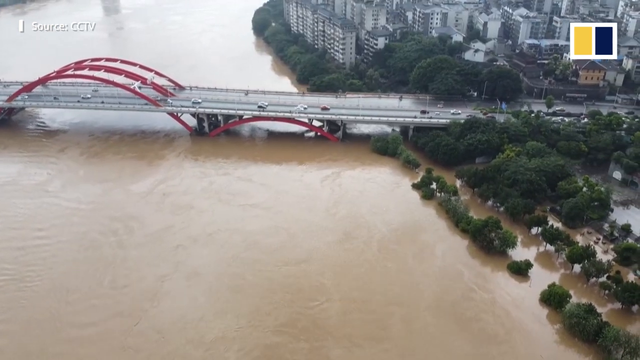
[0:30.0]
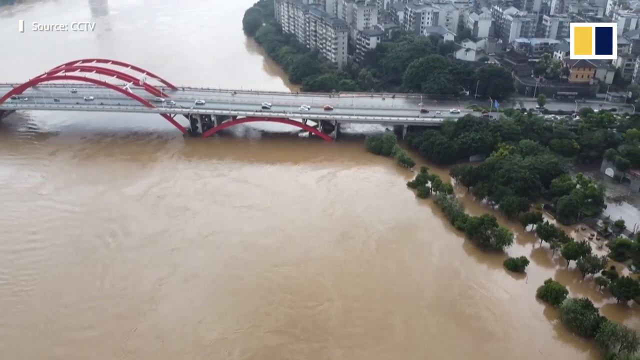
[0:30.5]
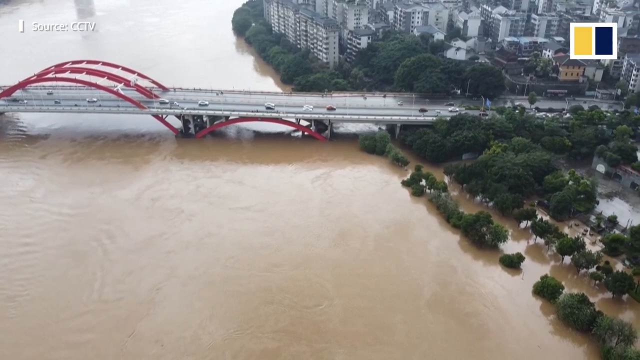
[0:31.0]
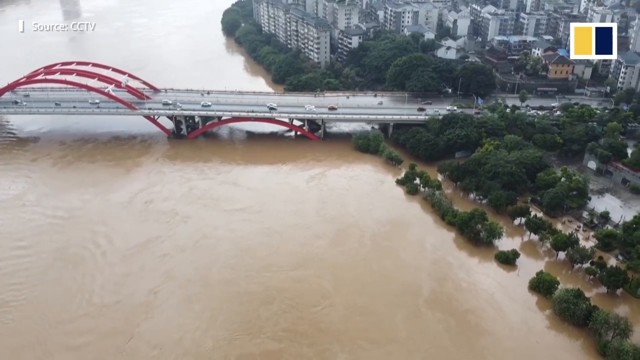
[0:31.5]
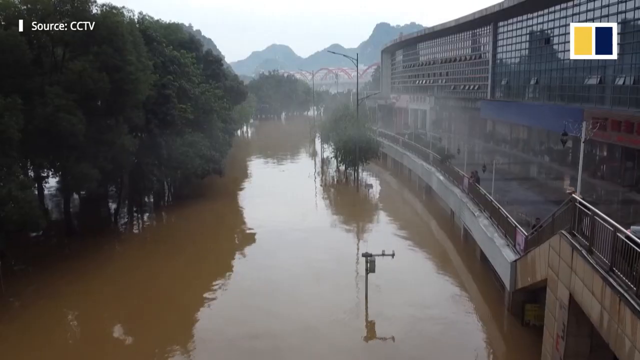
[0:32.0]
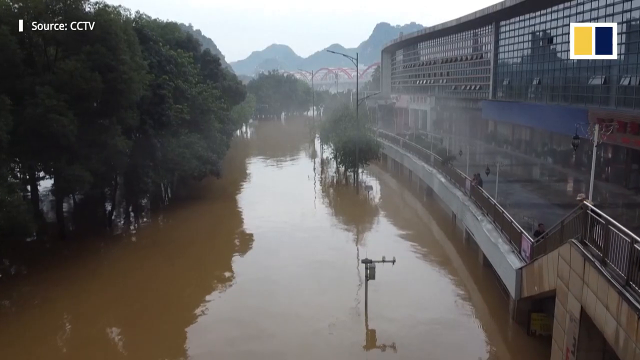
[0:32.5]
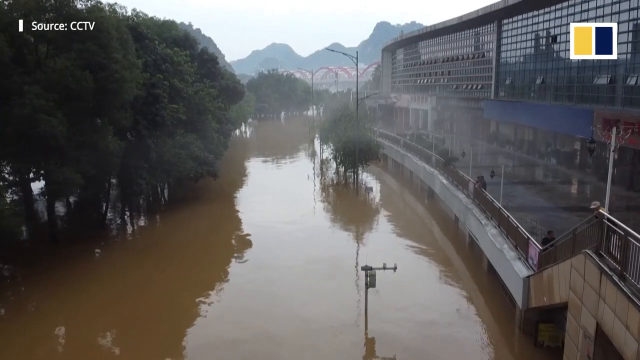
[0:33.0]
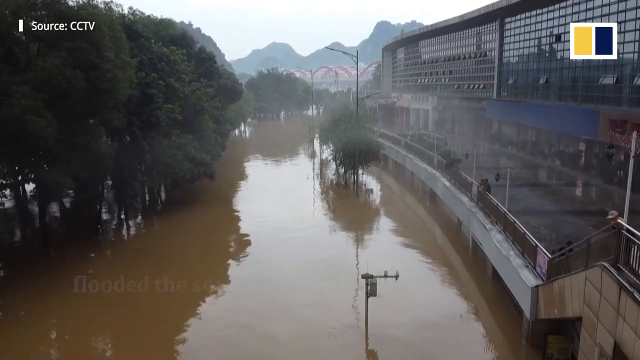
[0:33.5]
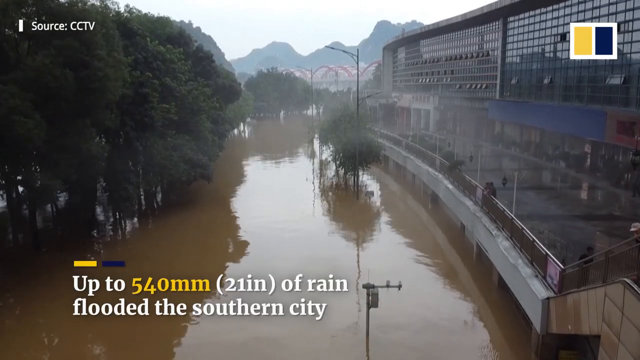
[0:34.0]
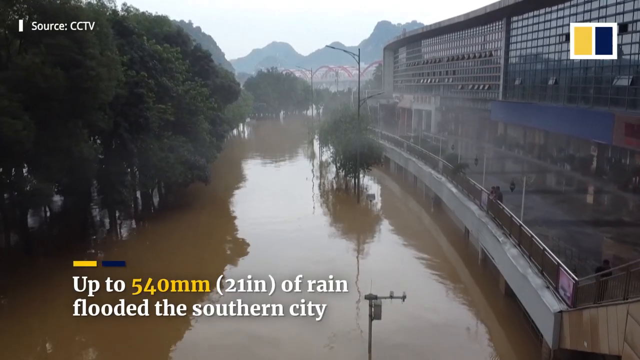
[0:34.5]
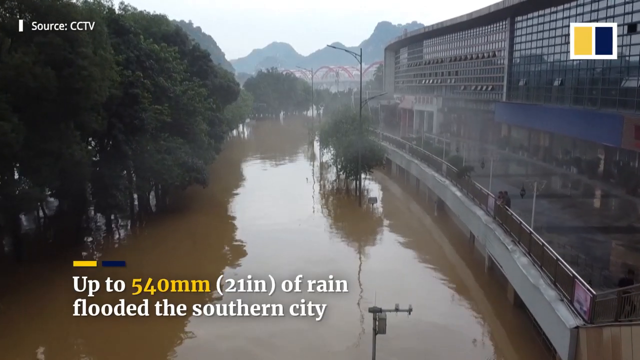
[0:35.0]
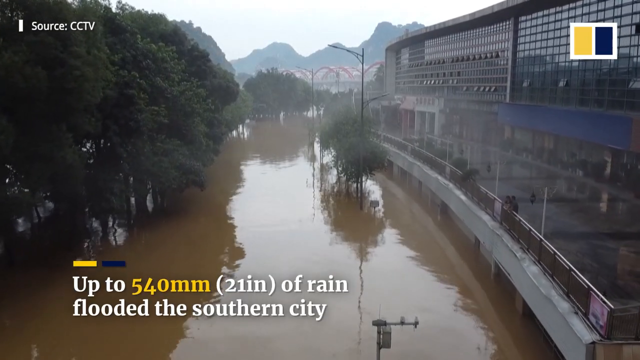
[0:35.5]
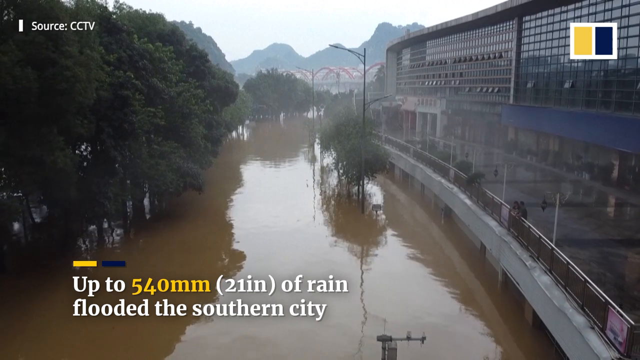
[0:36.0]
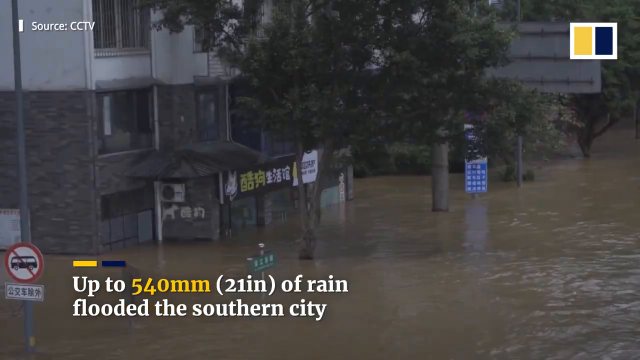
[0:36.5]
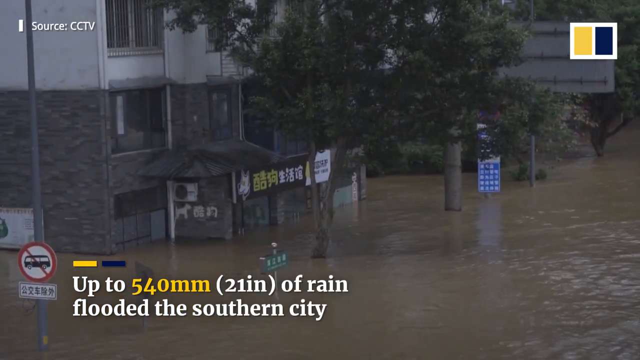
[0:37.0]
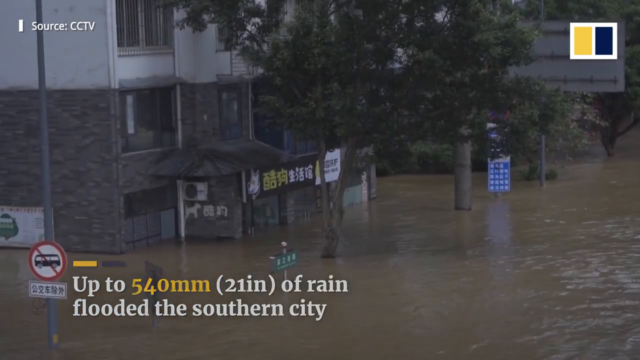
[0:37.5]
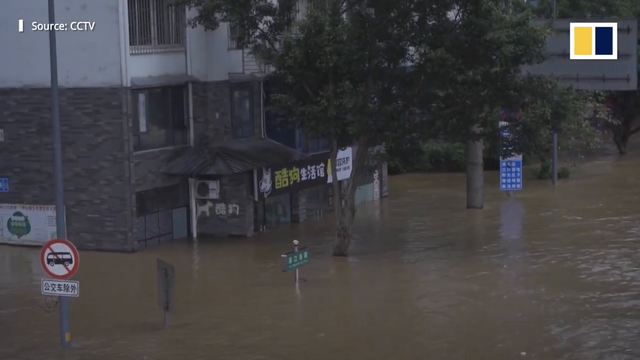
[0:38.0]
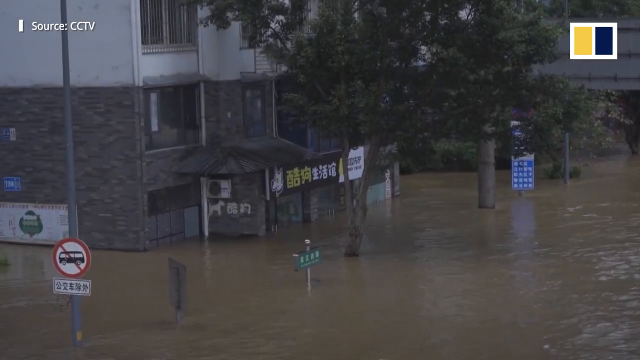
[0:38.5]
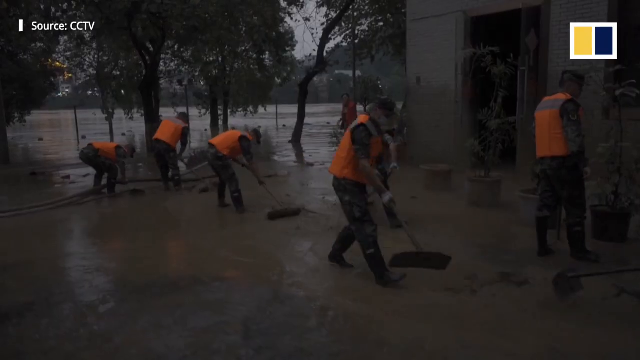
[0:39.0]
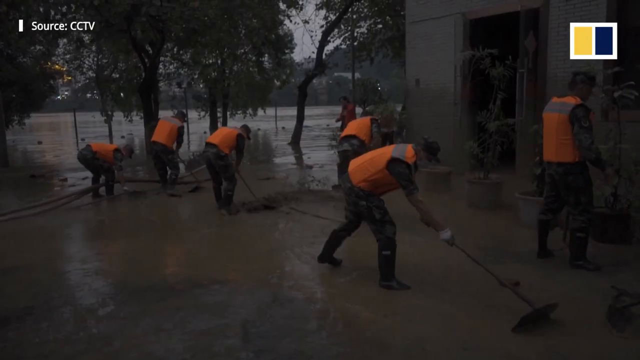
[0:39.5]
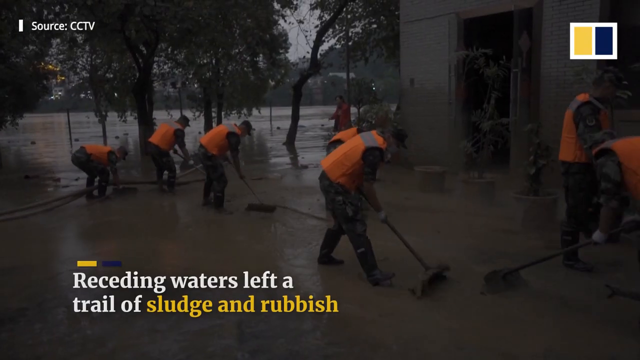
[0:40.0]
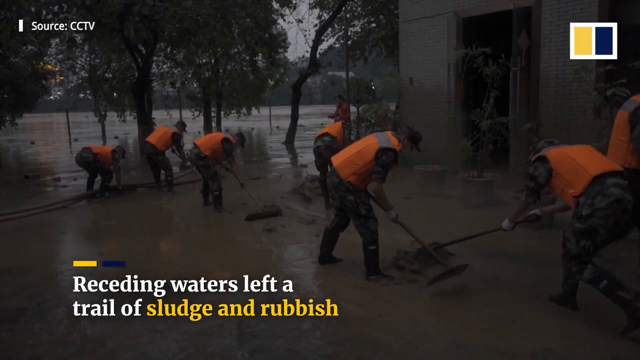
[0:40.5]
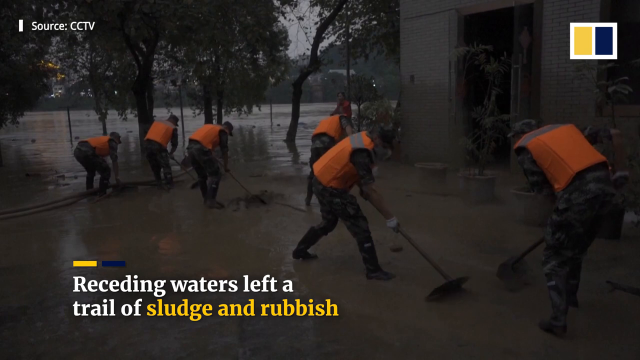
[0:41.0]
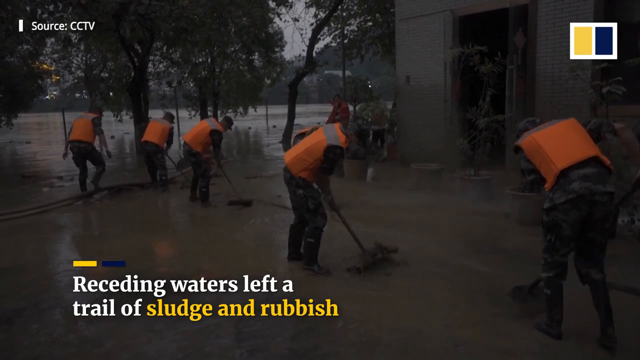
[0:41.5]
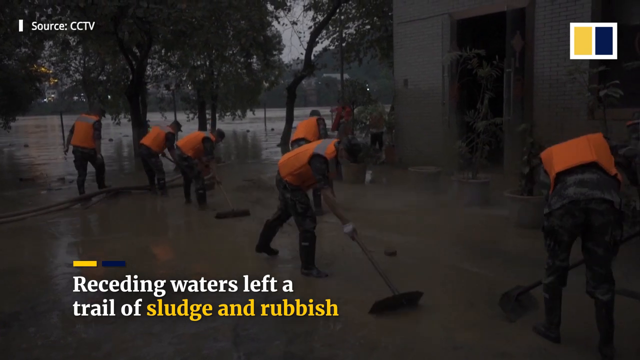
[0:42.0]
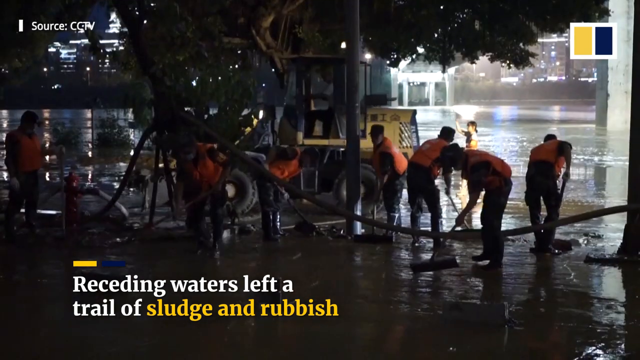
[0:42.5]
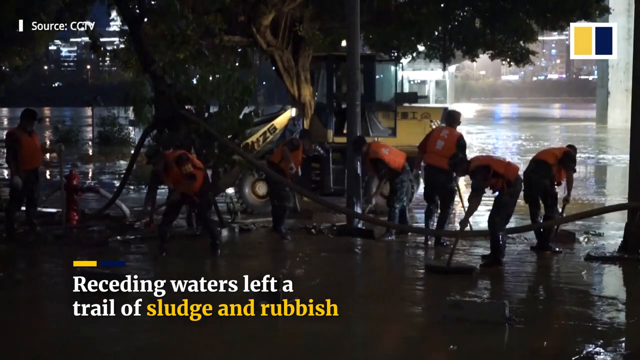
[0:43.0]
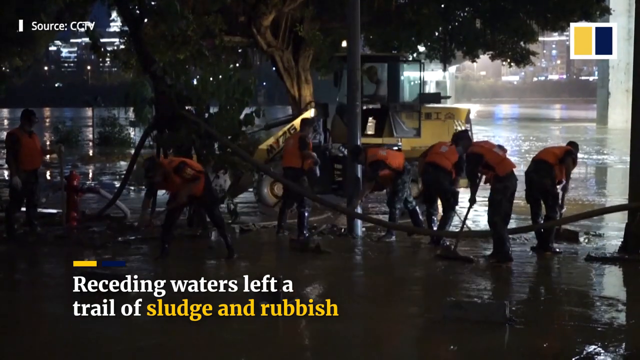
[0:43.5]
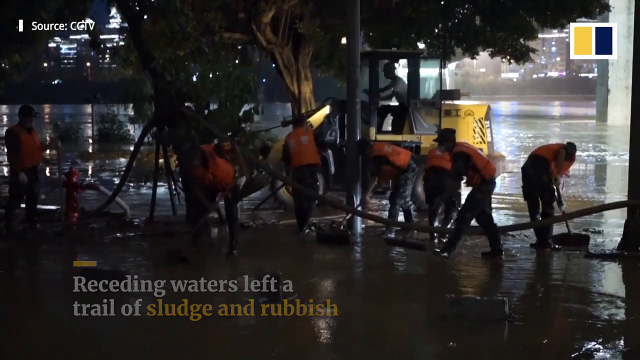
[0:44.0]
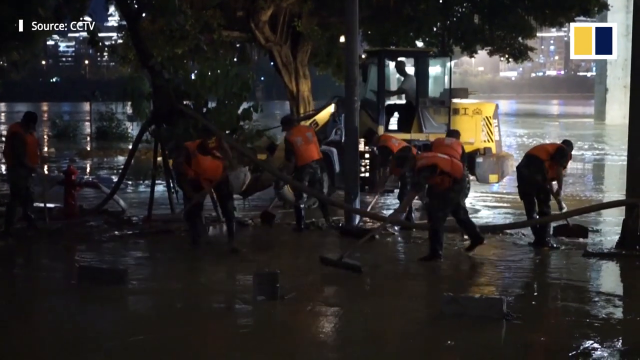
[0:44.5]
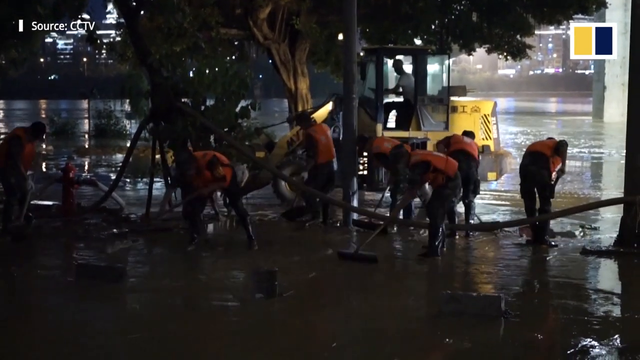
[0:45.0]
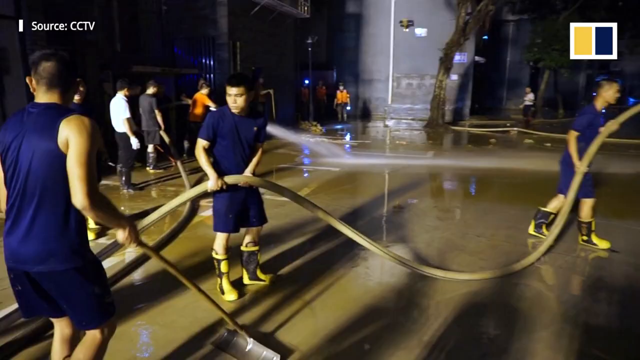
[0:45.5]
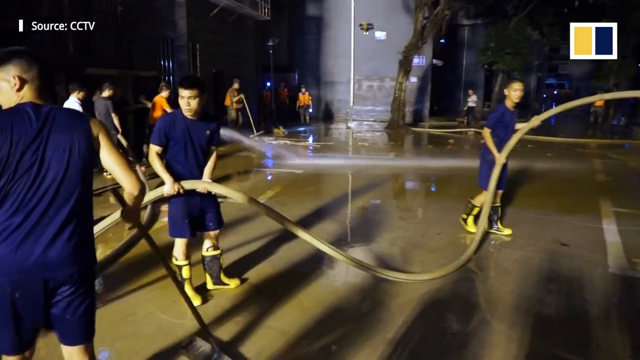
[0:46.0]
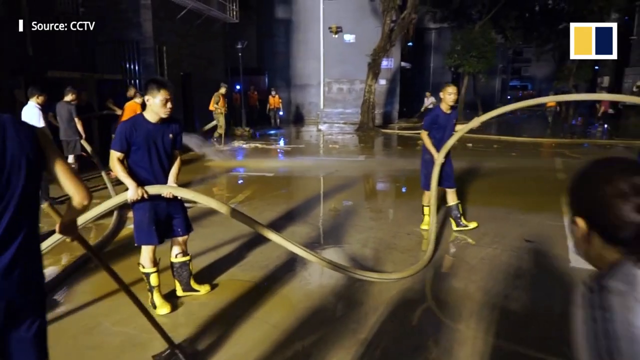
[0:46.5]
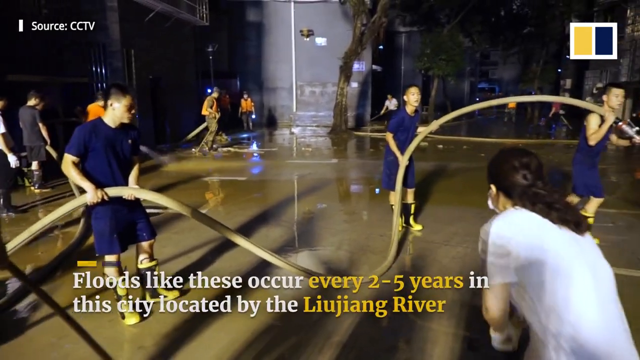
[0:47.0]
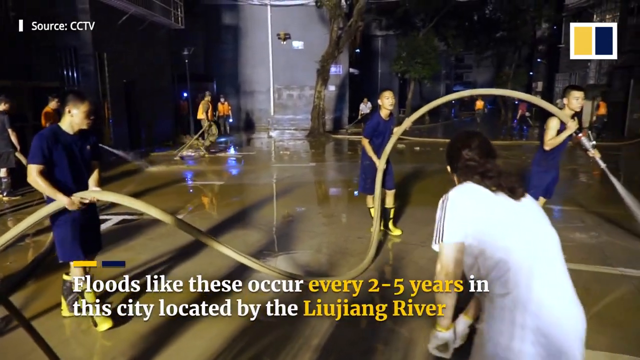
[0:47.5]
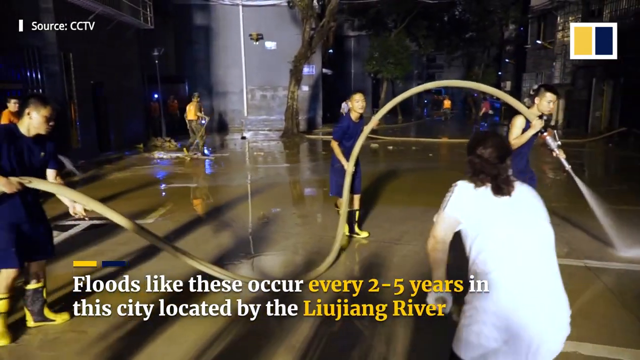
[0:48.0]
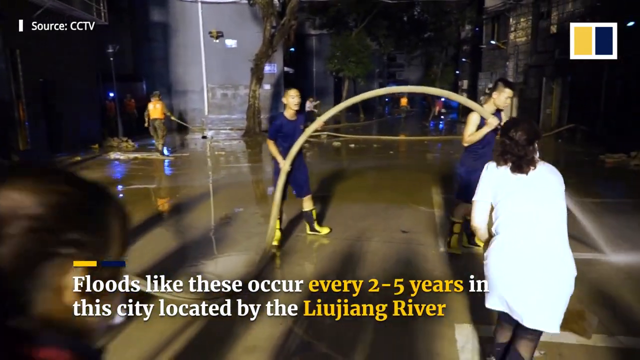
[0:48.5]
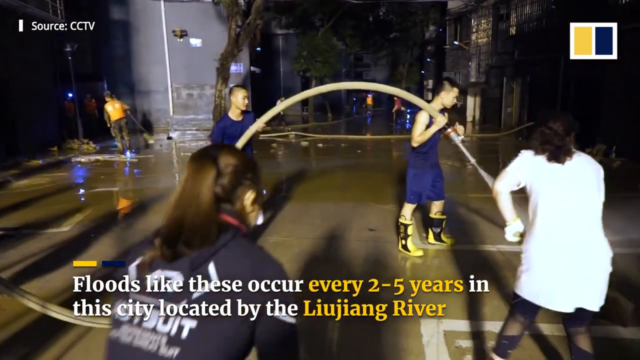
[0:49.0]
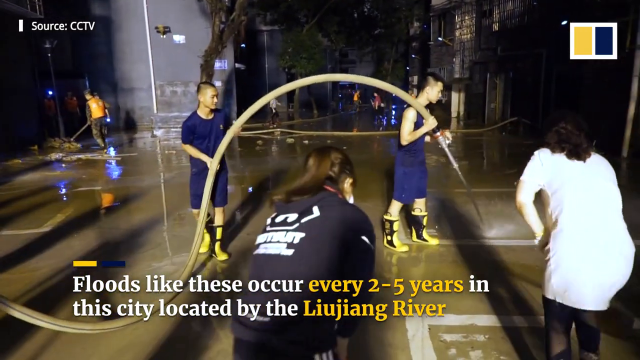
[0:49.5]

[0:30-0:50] A waterway that looks kind of like a canal is filled with dirty water. The video switches back to the people in orange vests, more of them now, raking through the mud. Some workers or other people in navy blue are holding the hose and working. The video appears to show the different water levels and how much rain fell. A machine, possibly a backhoe, is in the background behind the people in vests. Over the waterway, text at the bottom reads "up to 540 millimeters of rain flooded the southern city" and then "receding waters left a trail of sludge and rubbish". More cleanup efforts are shown, with text reading "floods like these occur every two to five years in the city located by the Liujiang River".